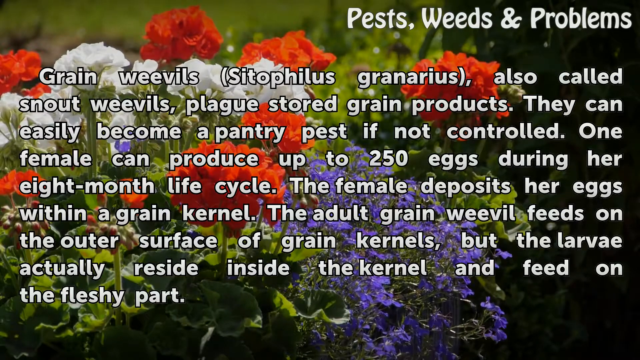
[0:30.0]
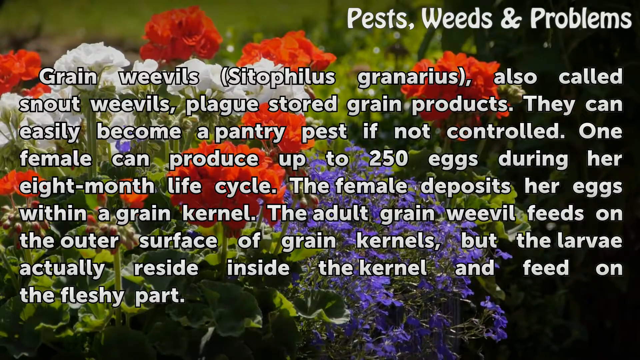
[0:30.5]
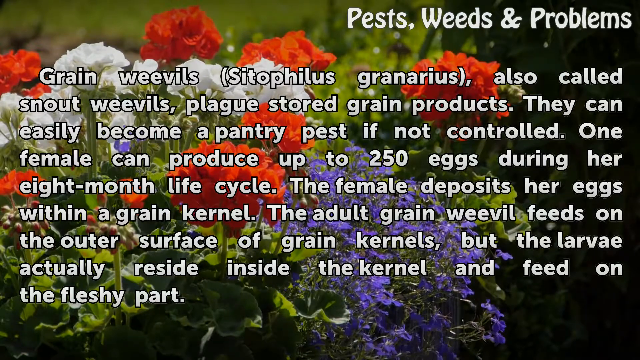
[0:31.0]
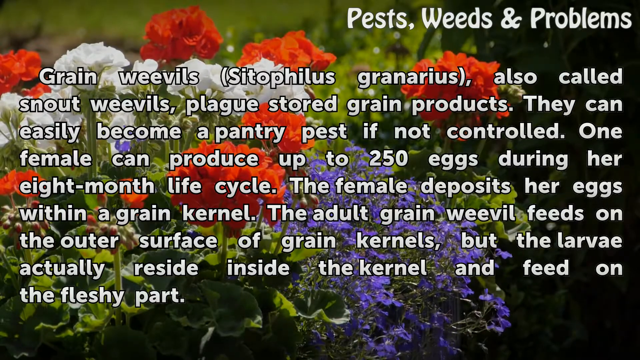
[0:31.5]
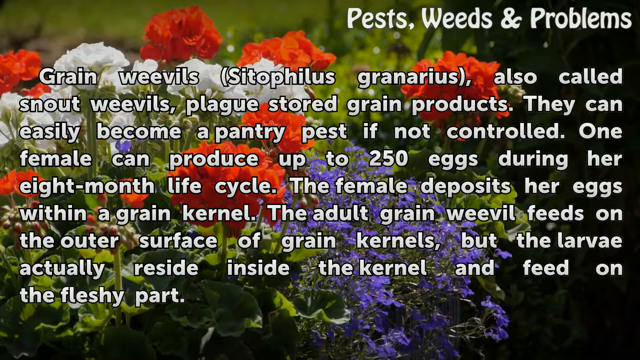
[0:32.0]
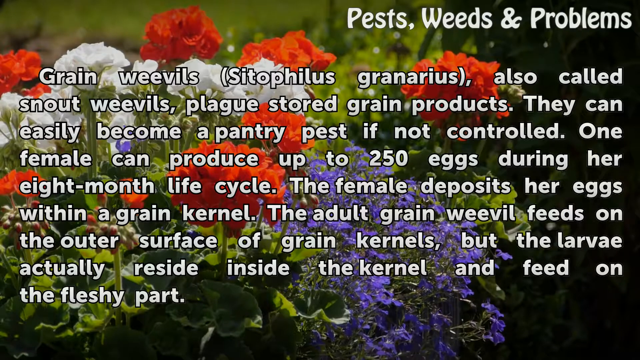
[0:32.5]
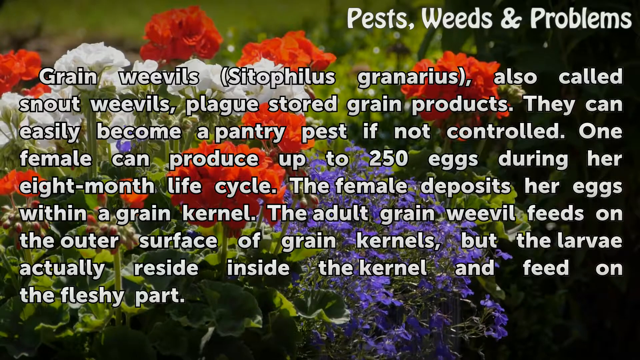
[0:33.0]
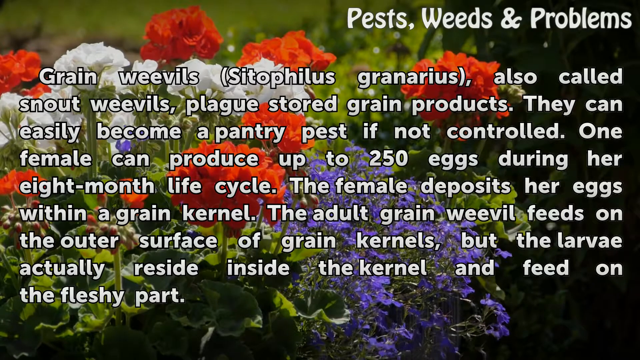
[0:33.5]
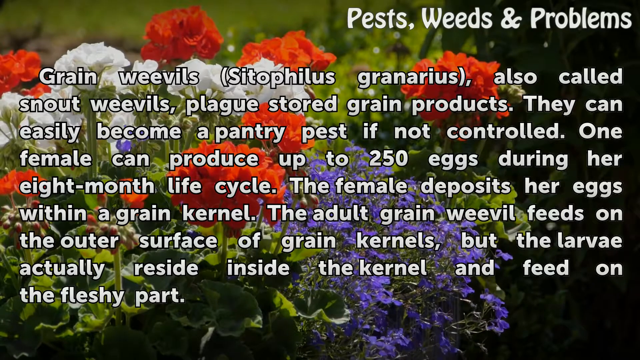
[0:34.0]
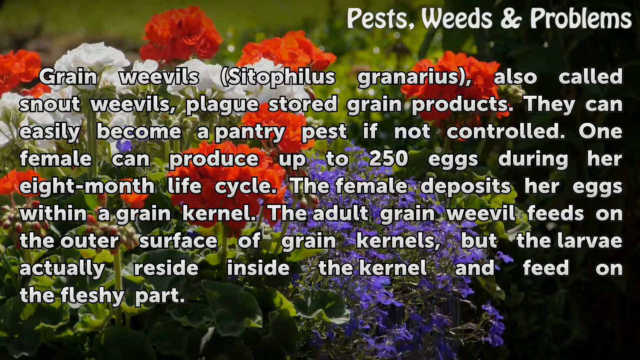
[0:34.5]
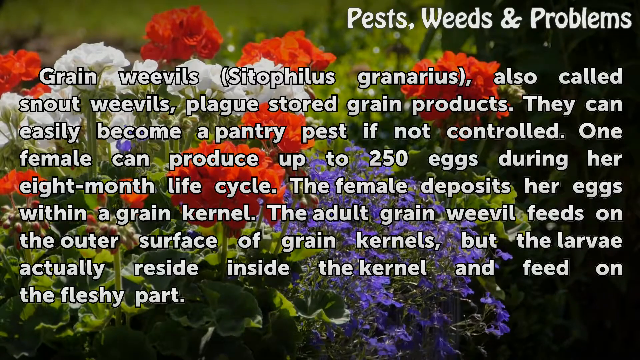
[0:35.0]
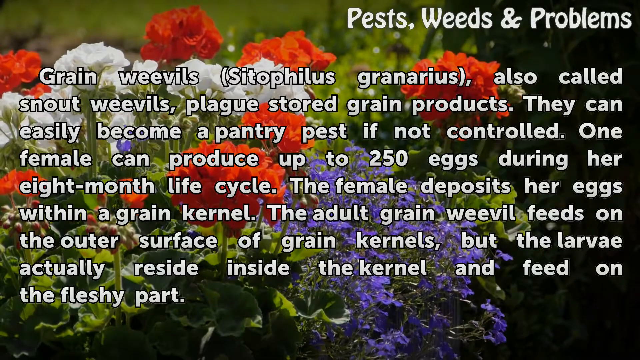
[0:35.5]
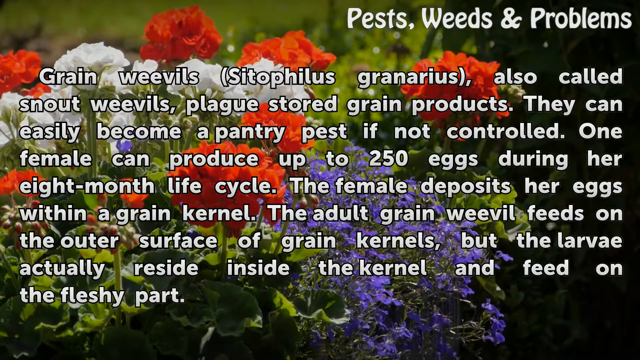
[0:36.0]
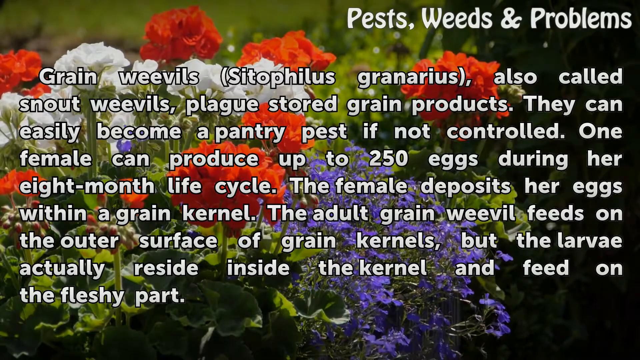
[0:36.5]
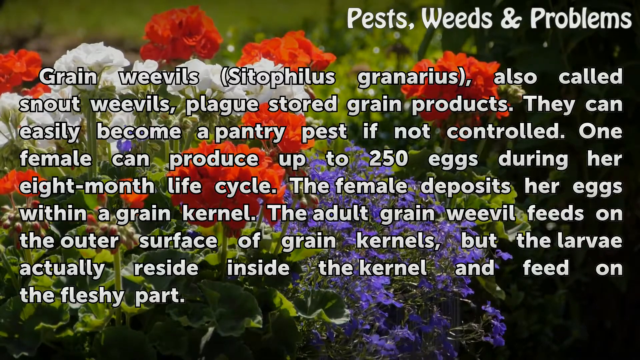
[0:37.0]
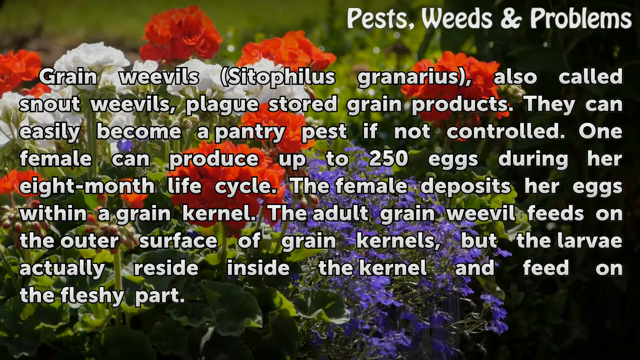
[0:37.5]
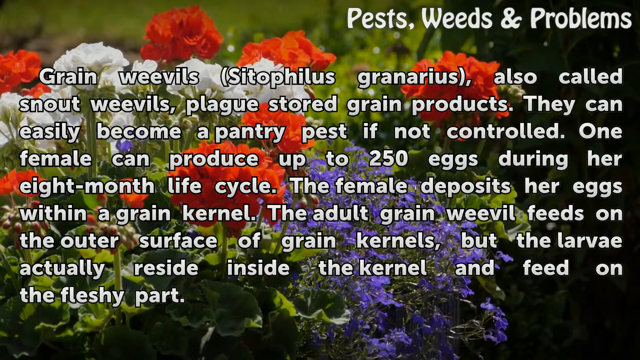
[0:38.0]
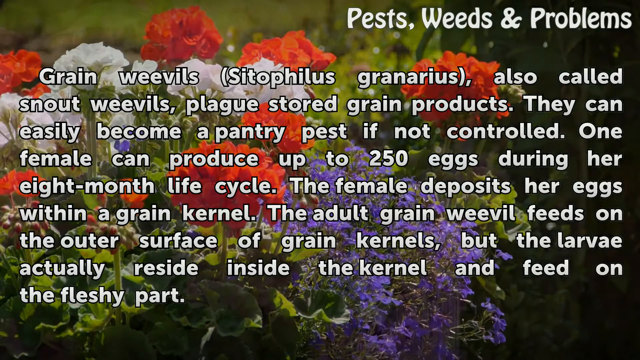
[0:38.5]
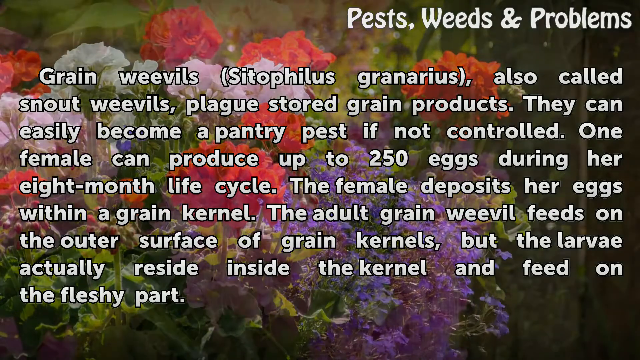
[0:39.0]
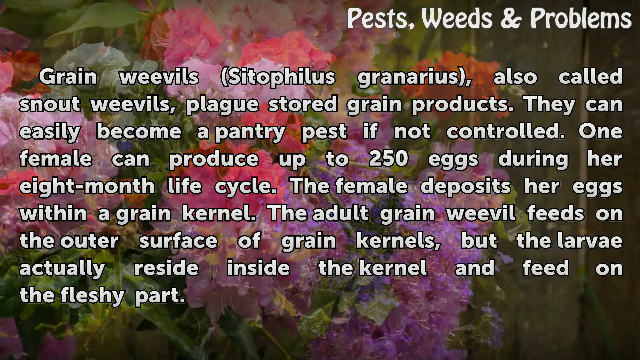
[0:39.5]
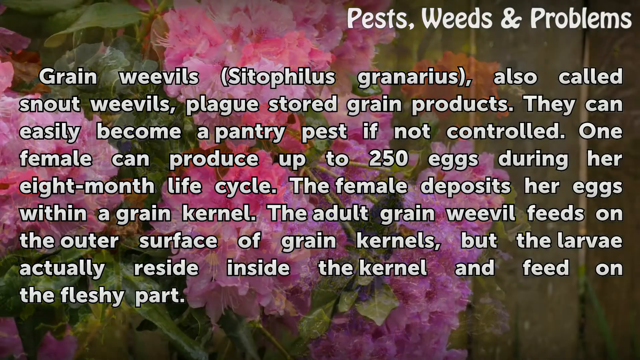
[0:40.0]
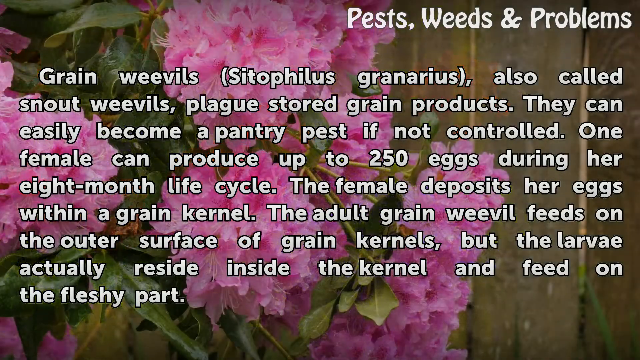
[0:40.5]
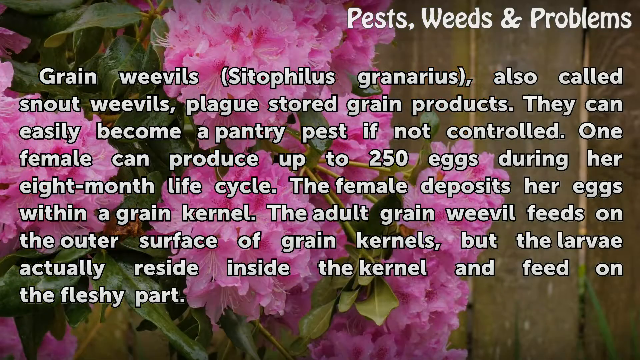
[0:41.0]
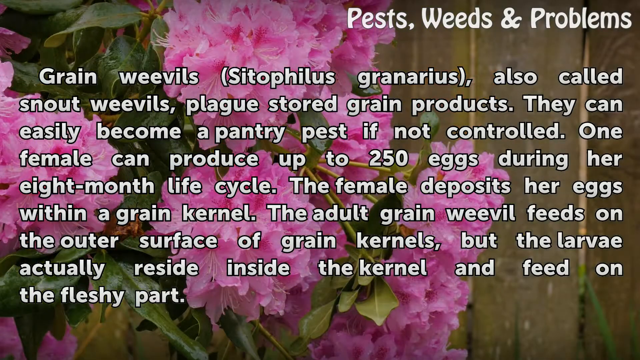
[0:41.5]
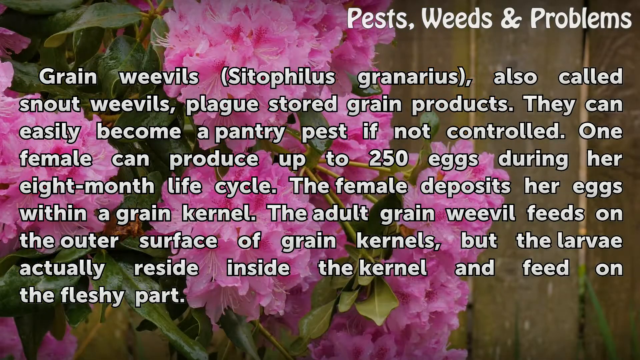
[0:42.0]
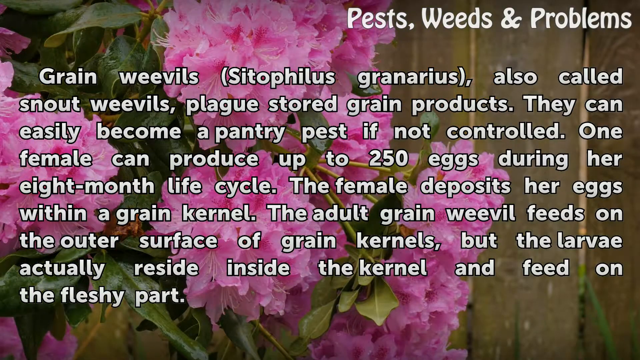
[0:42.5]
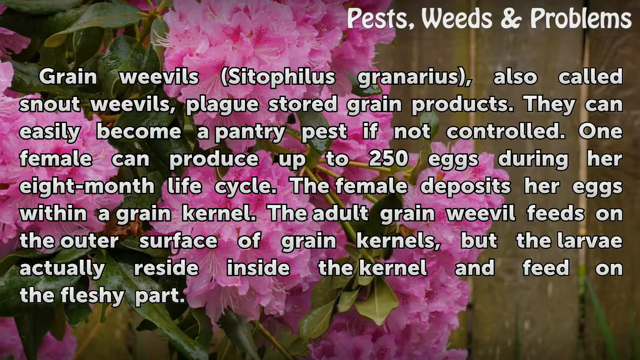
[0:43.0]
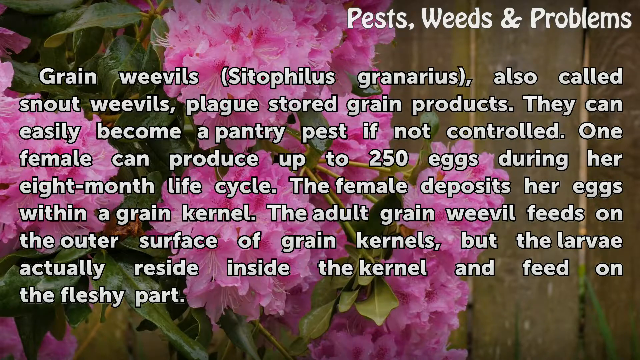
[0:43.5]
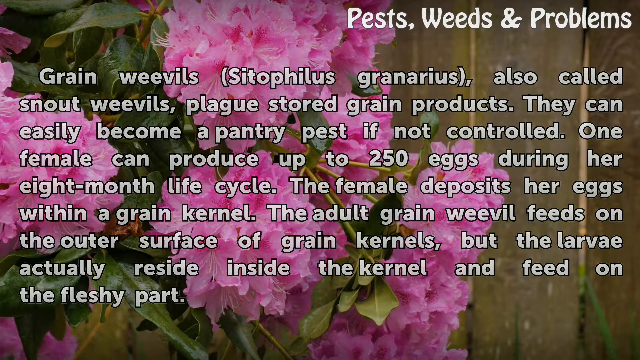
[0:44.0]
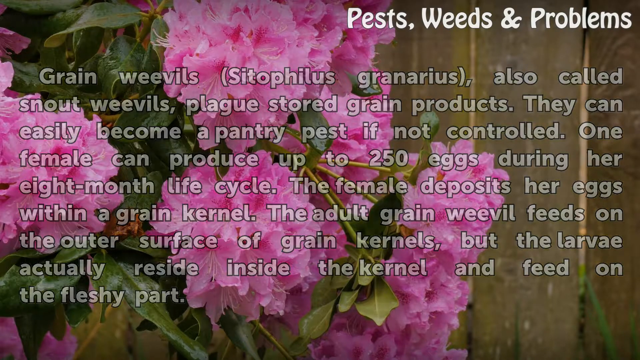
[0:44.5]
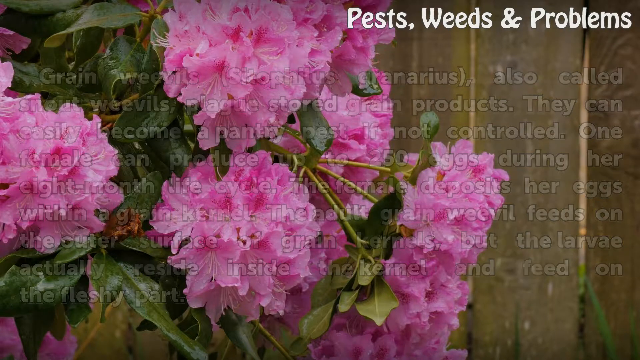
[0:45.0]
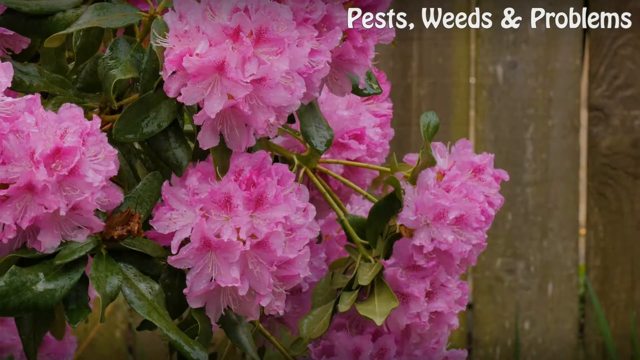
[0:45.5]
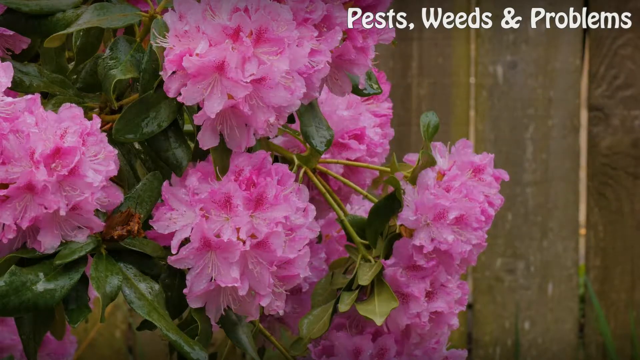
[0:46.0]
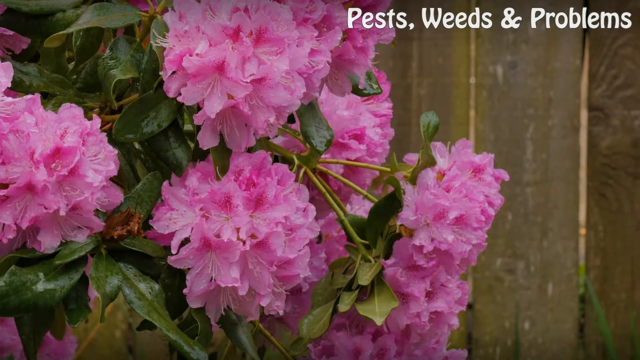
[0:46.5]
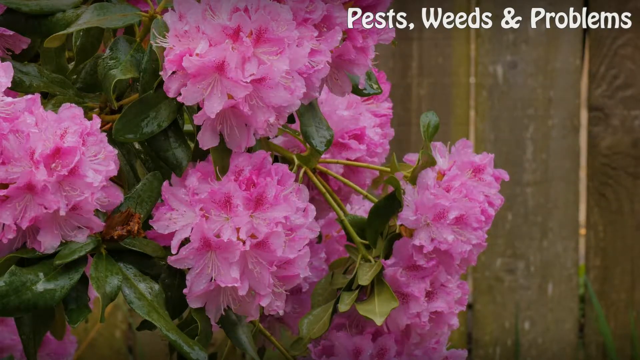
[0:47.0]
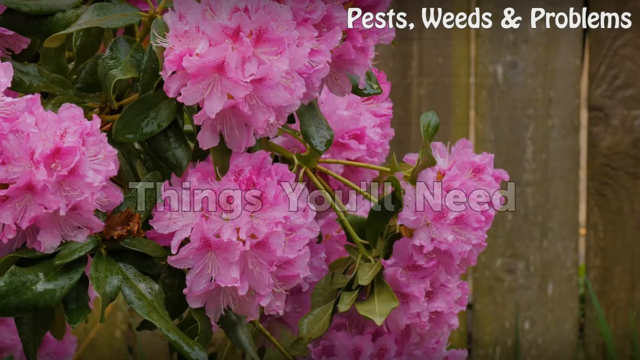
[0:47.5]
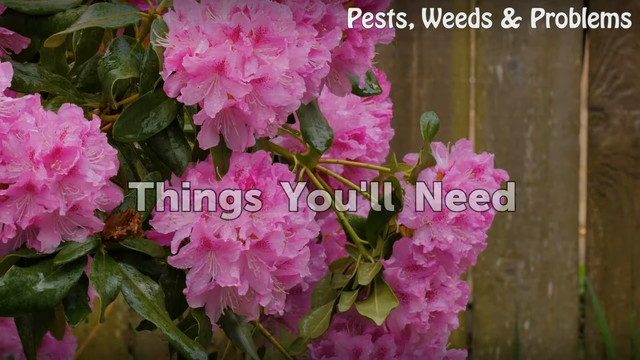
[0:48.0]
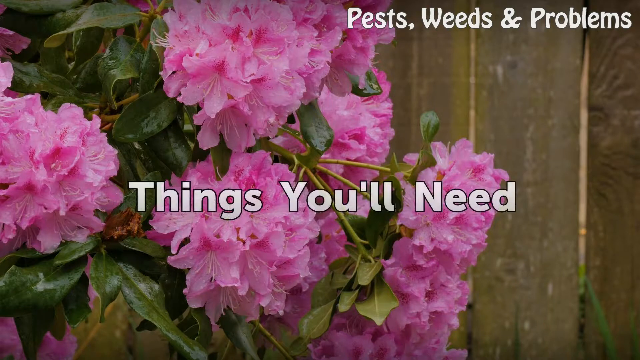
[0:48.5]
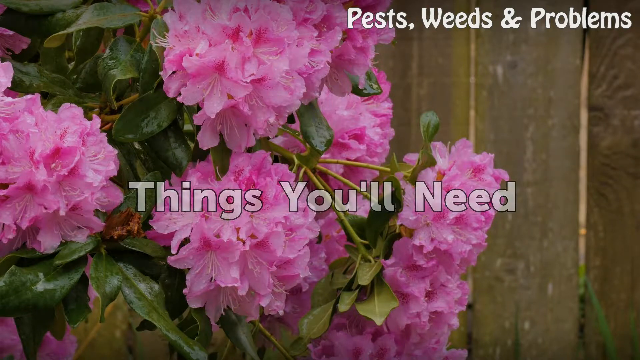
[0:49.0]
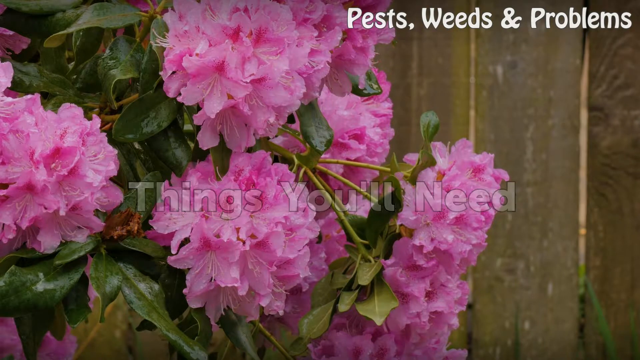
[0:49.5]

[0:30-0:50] A description of the grain weevil is on the screen. It gives the name "grain weevil" with a scientific name in parentheses beside it, says it is also called "snout weevils" and plagues stored grain products, that they "can easily become pantry pests if not controlled", and that "one female can produce 250 eggs, ruining your grain". In the background, red and white flowers sway slowly, with slowly moving purple flowers in the front. The writing on the screen then changes, azaleas or rhododendrons appear in the background, and text in front reads "things you'll need". Throughout, the background shows flowers swaying and wiggling slowly in the breeze, and "pest weeds and problems" appears in the top right corner of the screen.